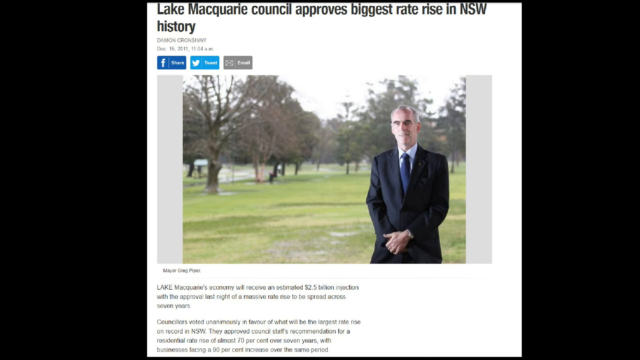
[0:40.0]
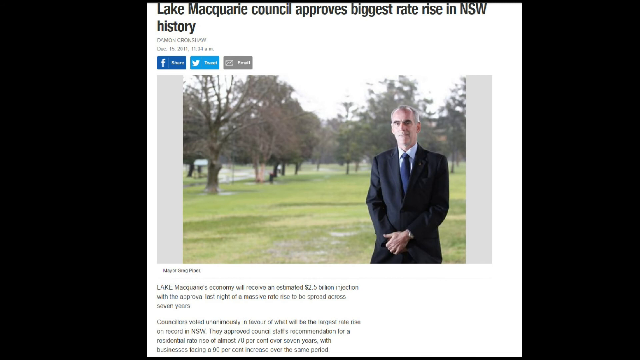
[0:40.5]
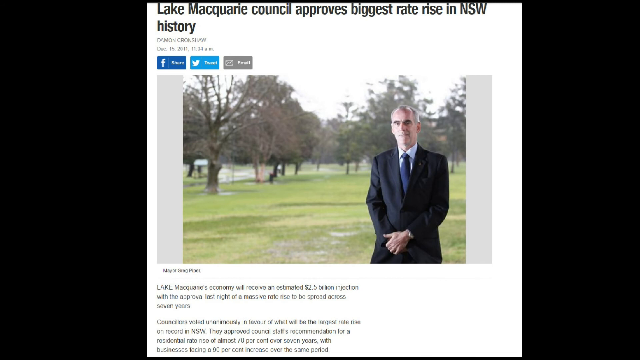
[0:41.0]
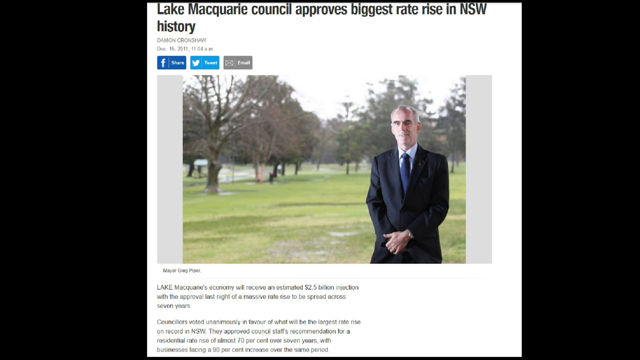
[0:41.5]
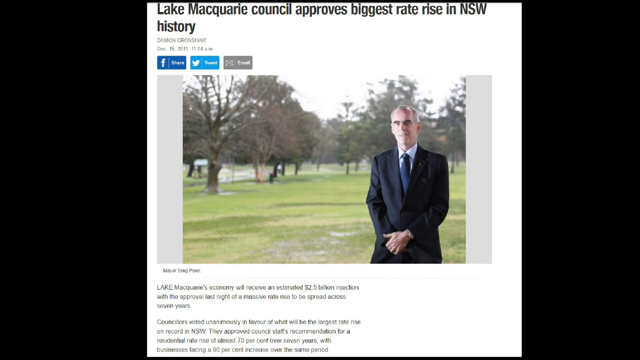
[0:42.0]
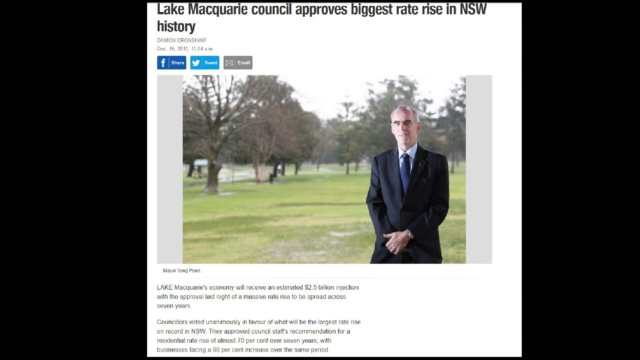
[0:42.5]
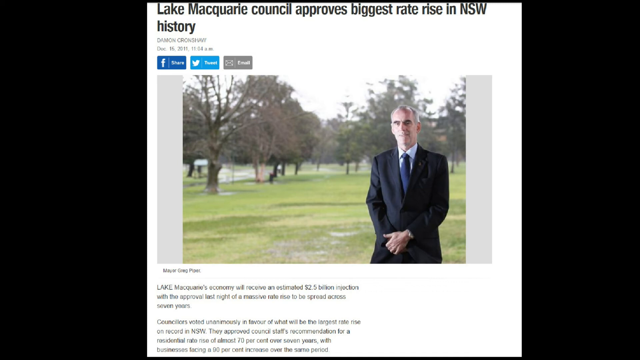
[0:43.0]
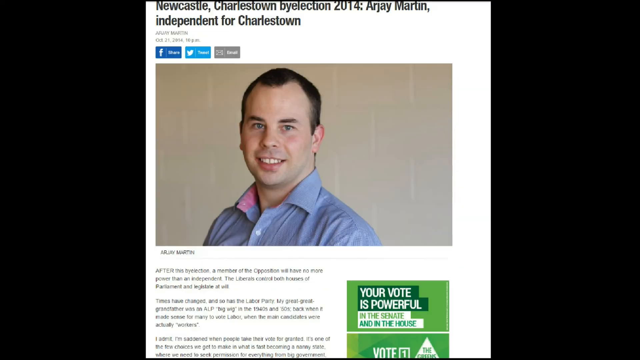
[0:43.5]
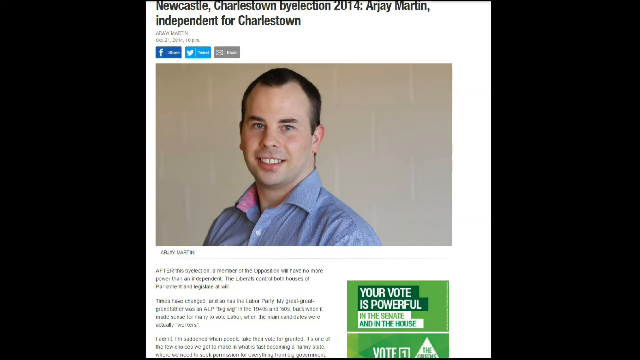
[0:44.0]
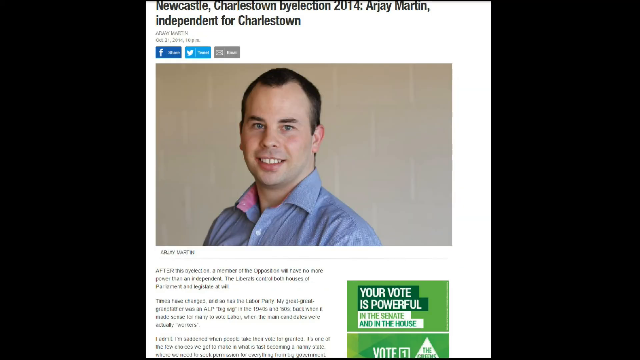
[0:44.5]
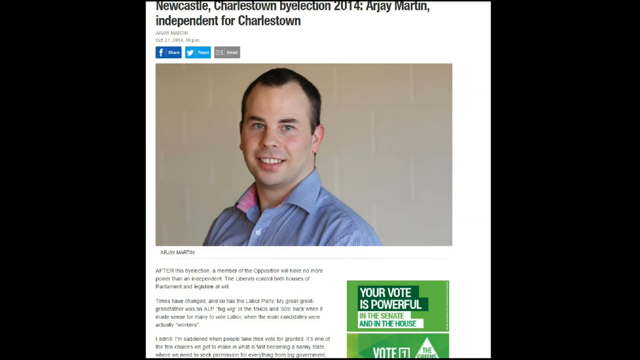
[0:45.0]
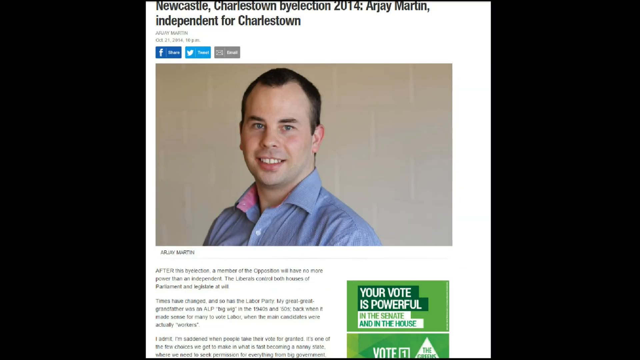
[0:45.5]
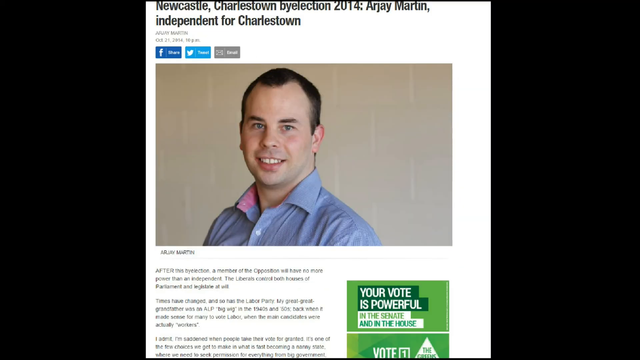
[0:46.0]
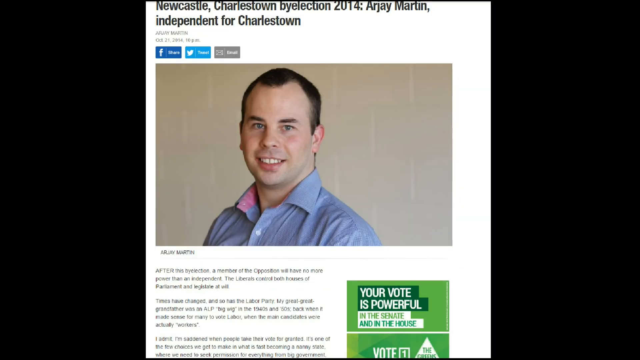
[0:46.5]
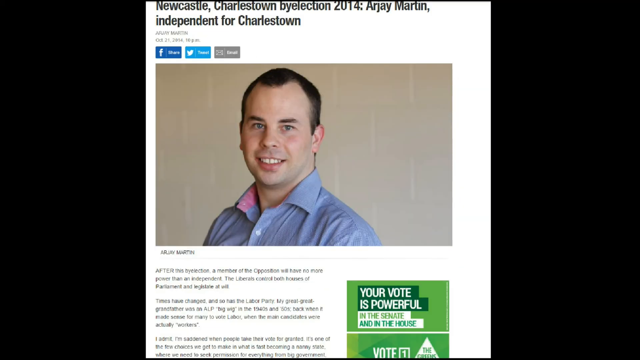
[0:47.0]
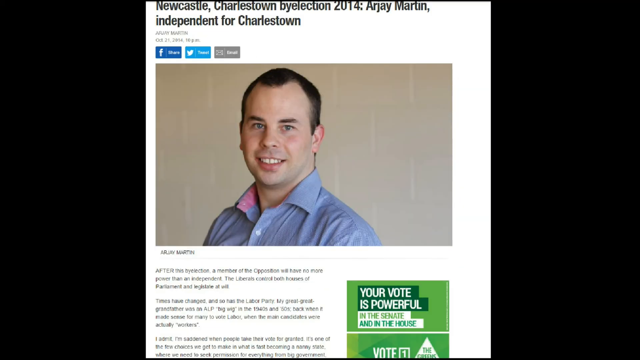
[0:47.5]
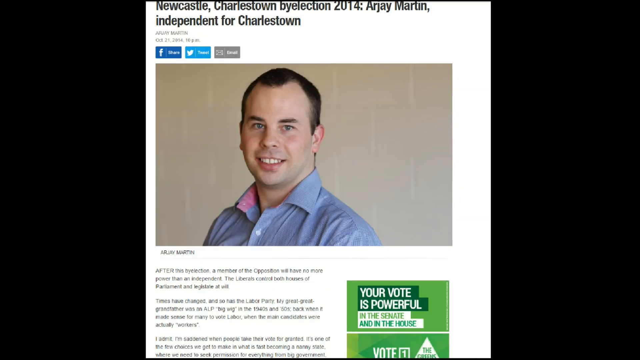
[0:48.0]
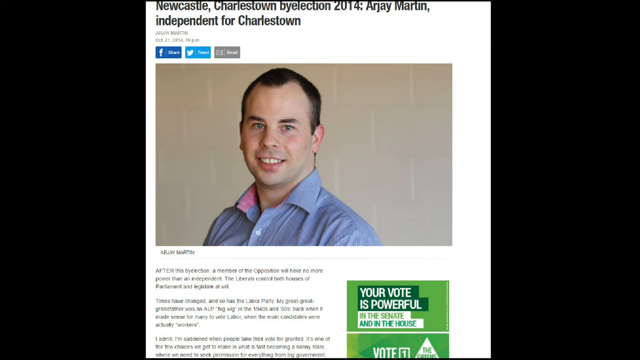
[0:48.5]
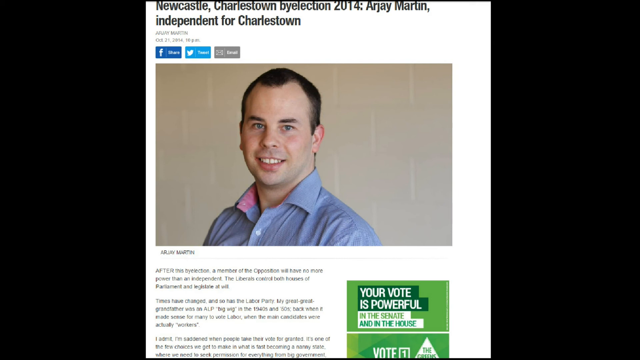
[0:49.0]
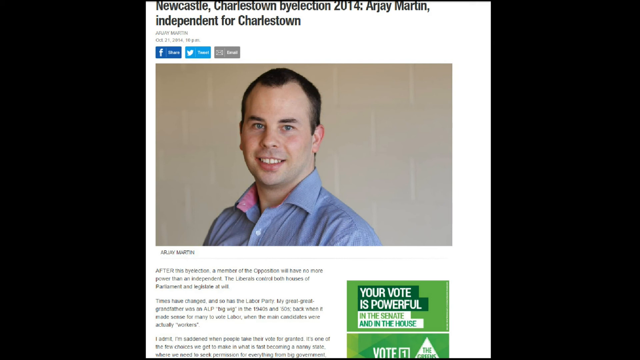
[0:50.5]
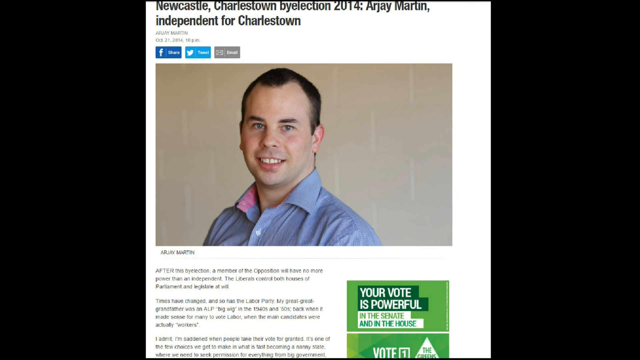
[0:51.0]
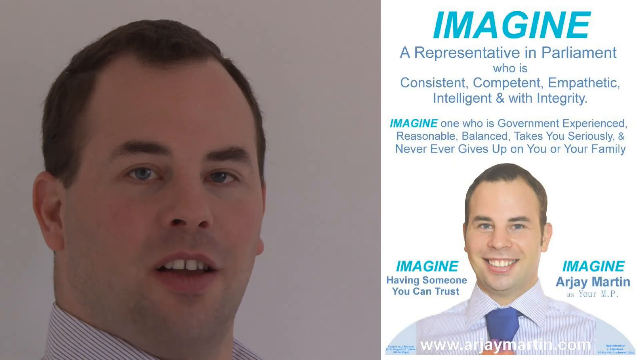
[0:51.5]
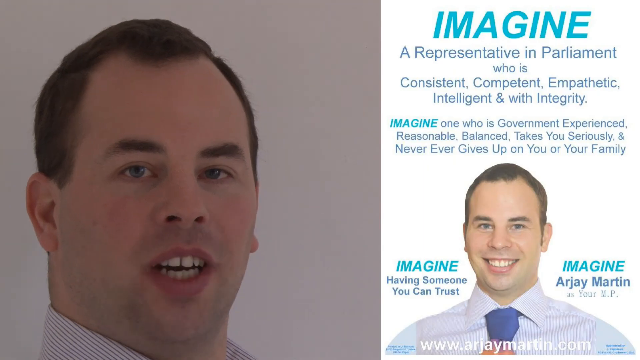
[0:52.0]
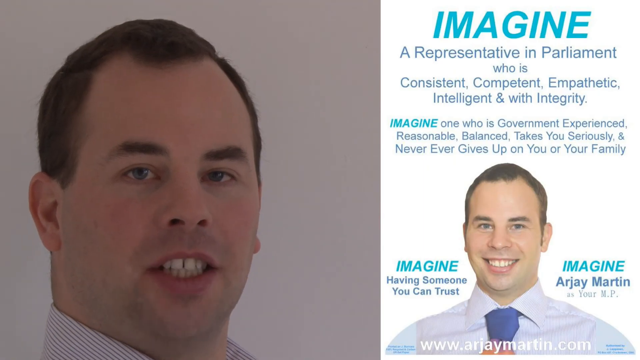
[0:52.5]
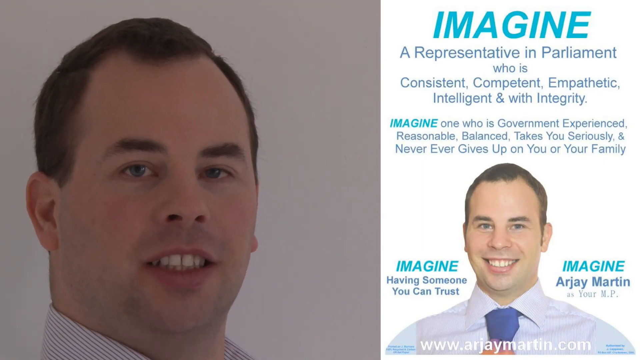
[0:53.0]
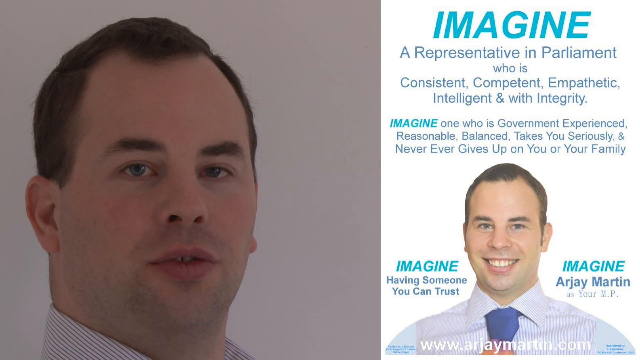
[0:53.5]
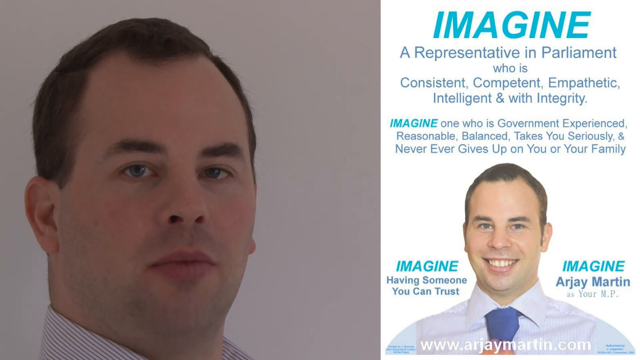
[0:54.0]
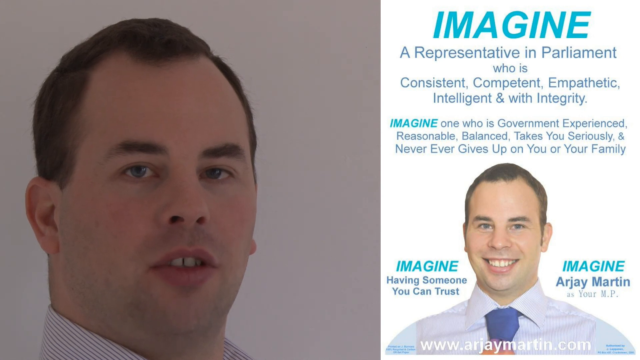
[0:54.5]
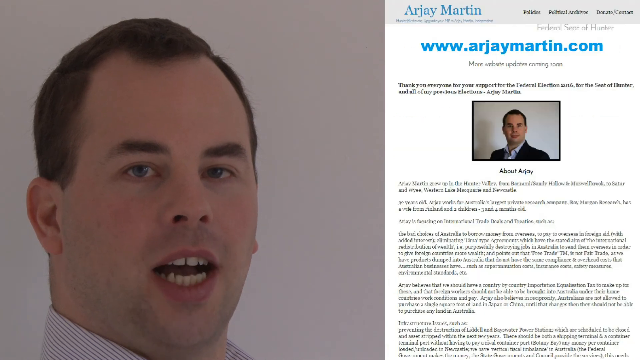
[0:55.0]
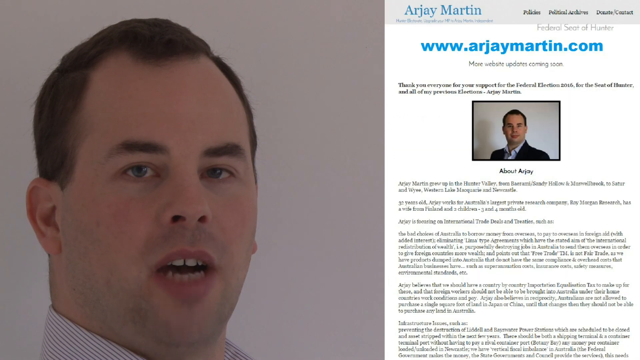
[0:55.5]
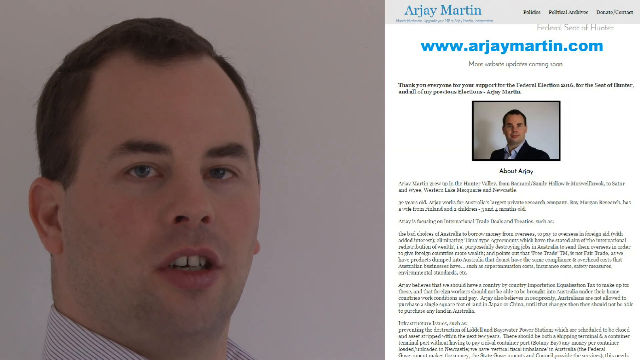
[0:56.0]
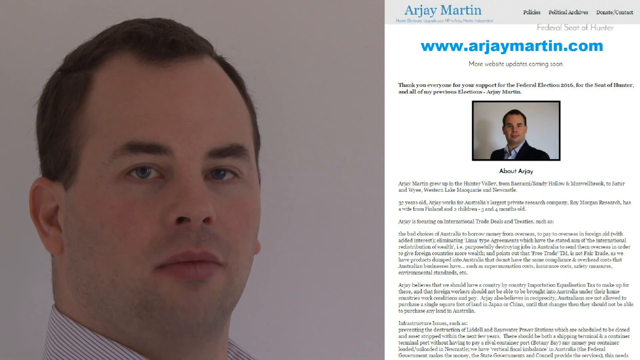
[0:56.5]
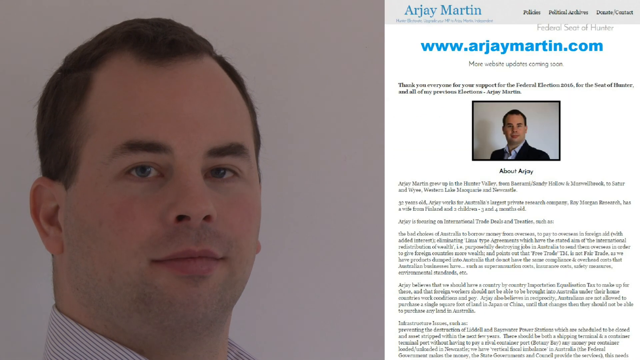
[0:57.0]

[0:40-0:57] A news article appears with a black title at the top reading "Lake Macquarie council approves biggest rate rise in NSW history". It shows a man in a dark black suit with a blue tie standing in front of a green field, his hands together in front of his waist. The man's head is slightly balding, and bare trees with no foliage stand in the background. The scene changes to a different news article titled "Newscastle, Charleston, byelection, 2014, Arjay Martin independent for Charleston". Its image shows a man in a blue collared shirt and a tie standing facing the camera. He has short brown hair and a slight smile, and looks at the camera. Turquoise text at the top says "Imagine", and below it smaller blue text says "A representative in Parliament who is consistent, competent, empathetic, intelligent, and with integrity". The scene then changes to a website for the man, with blue text at the top reading "www.arjaymartin.com" and a picture of him below.